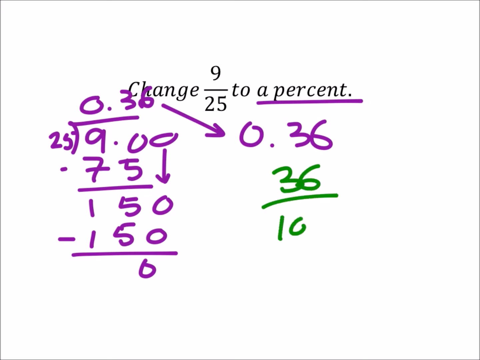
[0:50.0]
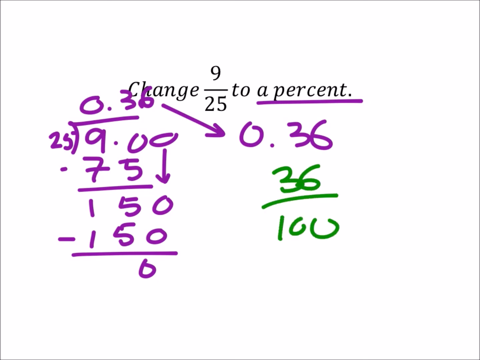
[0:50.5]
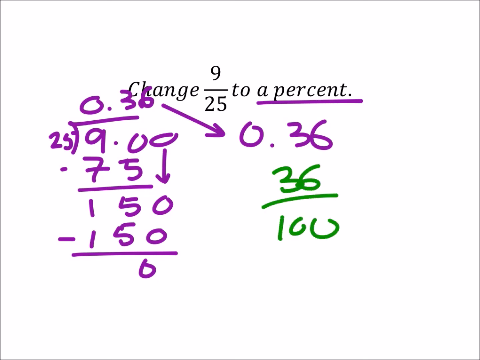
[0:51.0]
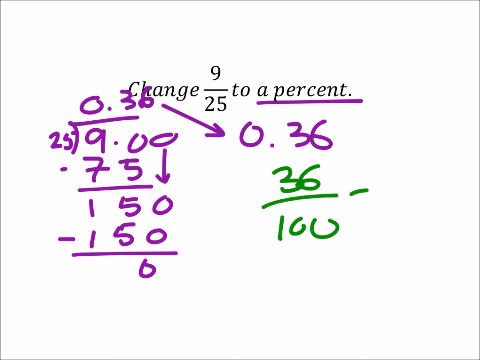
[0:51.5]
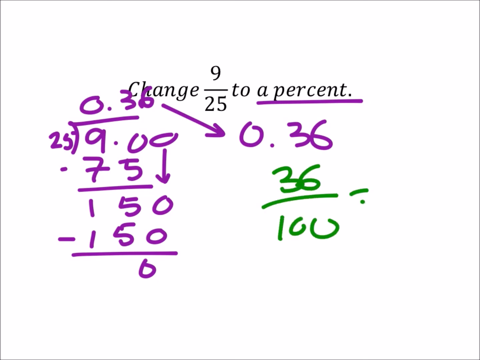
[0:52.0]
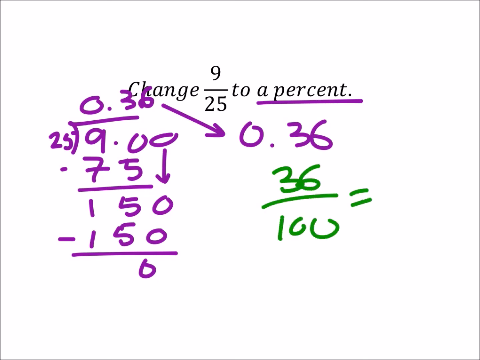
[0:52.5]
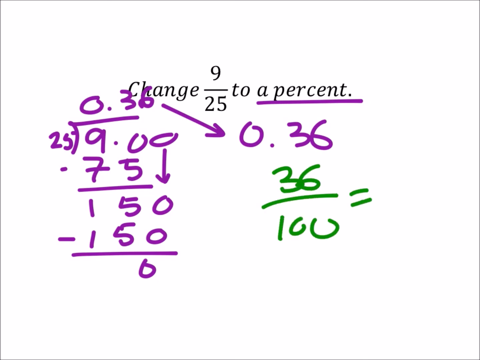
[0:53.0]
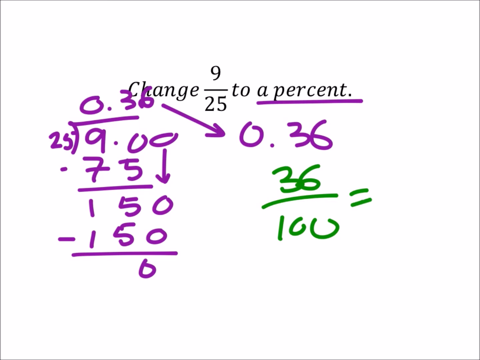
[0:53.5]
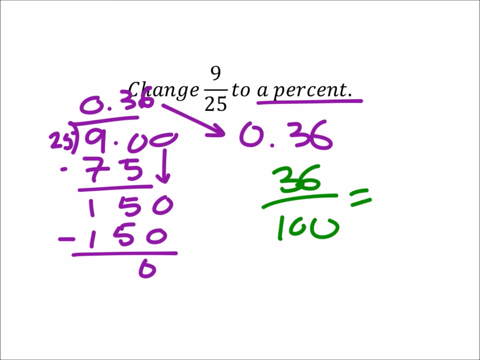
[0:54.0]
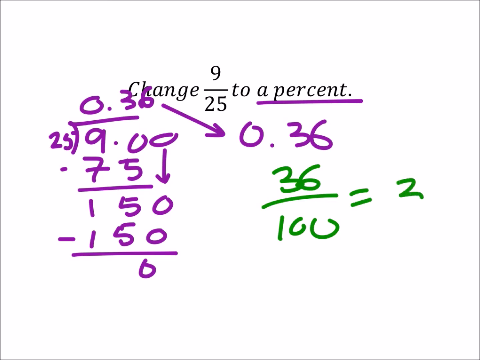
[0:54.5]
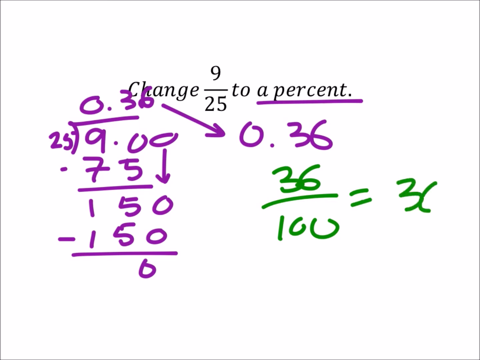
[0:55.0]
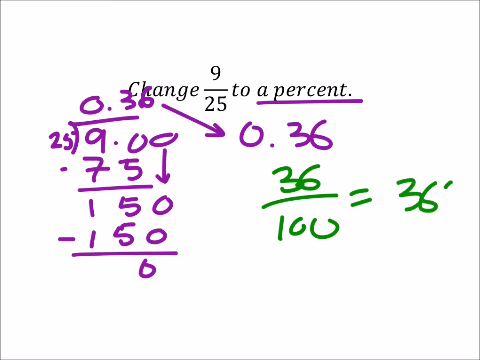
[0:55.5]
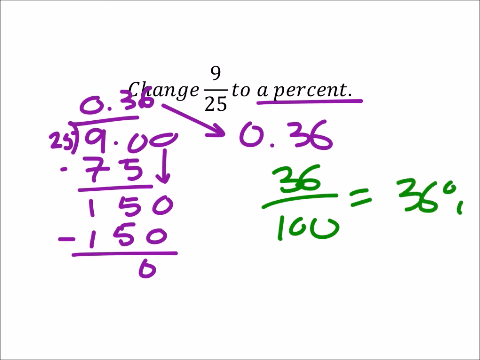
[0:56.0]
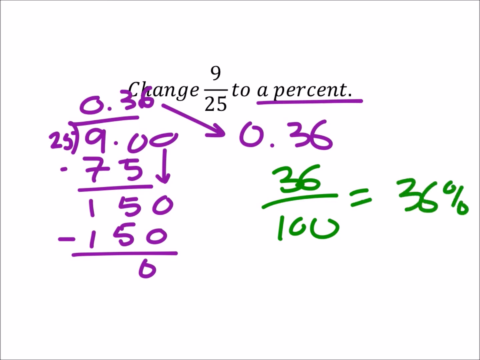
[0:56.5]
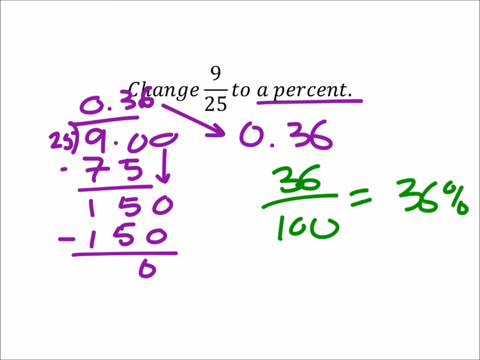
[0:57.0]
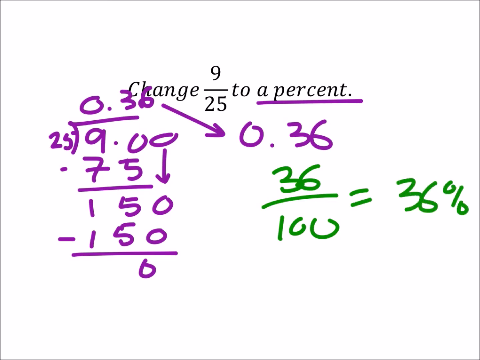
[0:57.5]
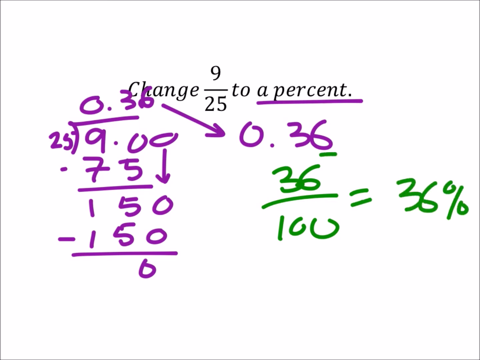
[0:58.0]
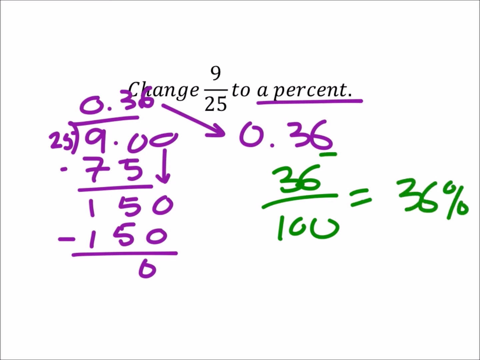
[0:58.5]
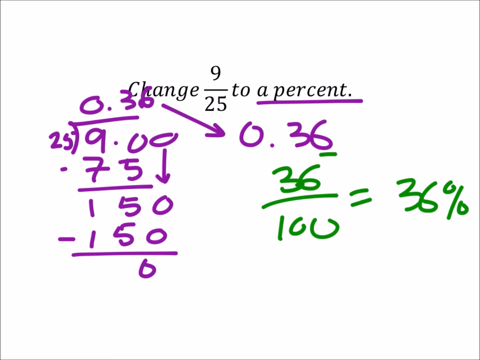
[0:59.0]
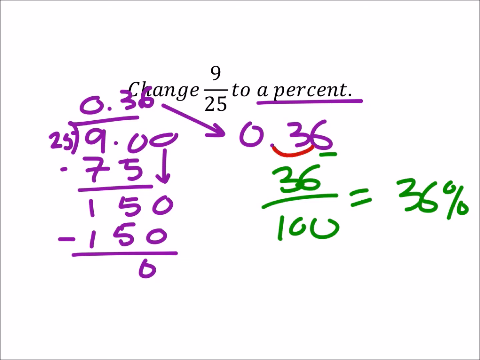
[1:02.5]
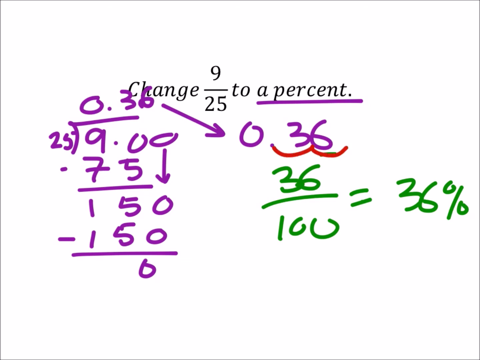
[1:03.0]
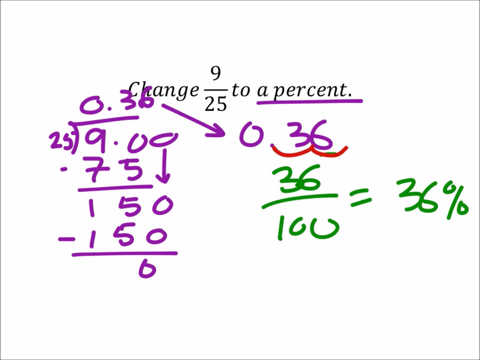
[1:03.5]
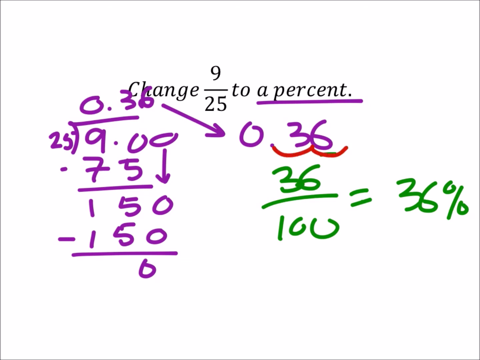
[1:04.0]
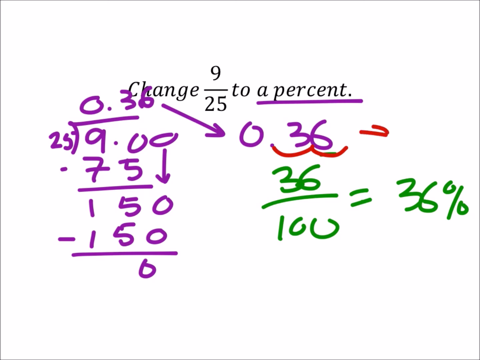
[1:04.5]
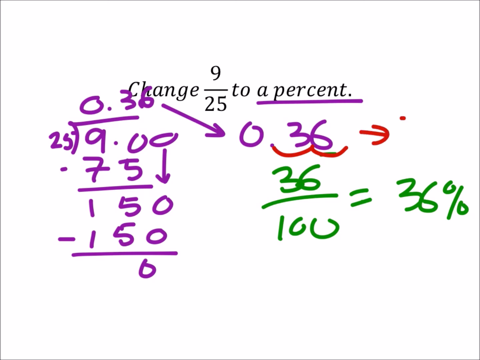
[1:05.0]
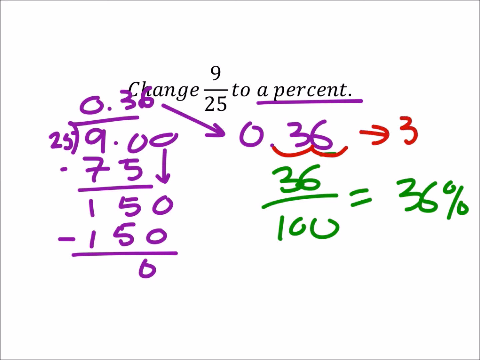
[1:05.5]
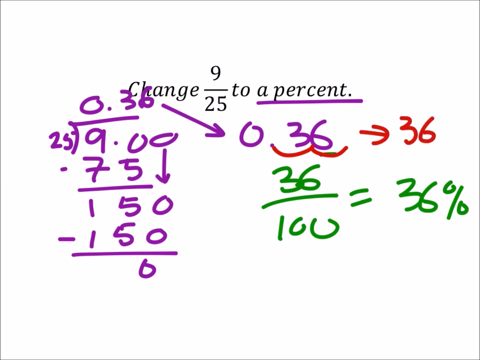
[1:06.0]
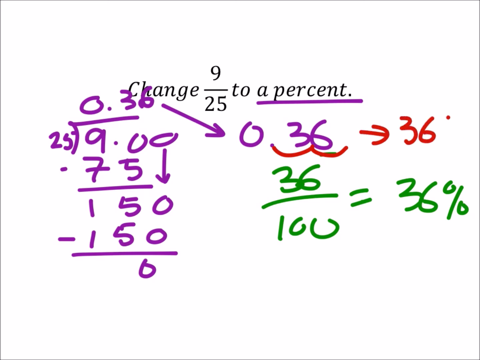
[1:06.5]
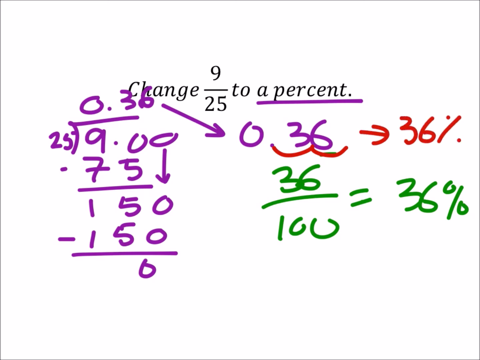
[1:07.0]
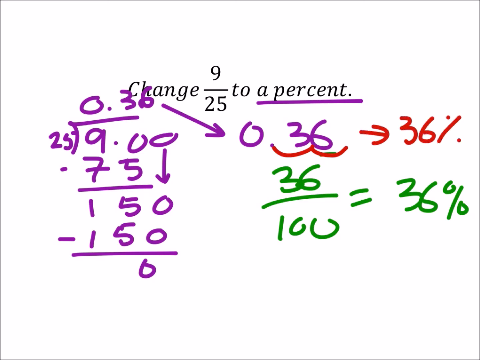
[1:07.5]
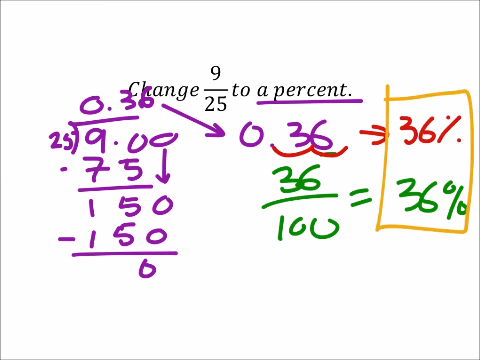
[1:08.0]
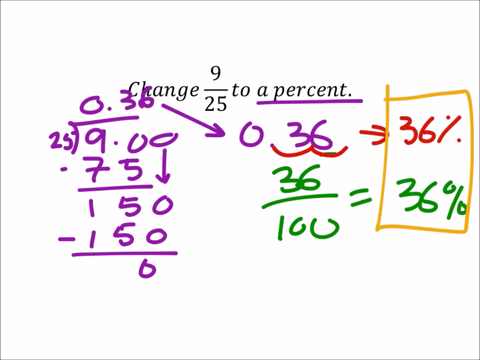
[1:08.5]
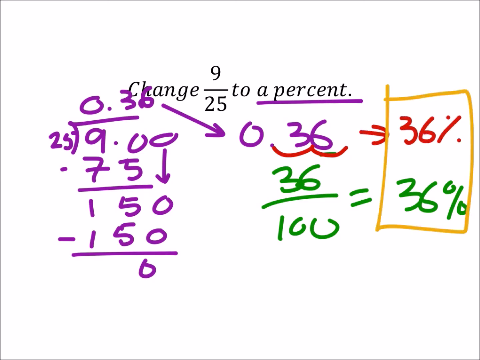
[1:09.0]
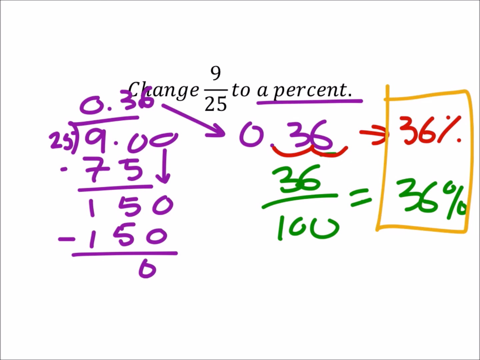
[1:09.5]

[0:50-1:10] A 0 is added to the green 10, turning it into 100, followed by an equals sign and a 36 to its right, so the green text reads 36 over 100 equals 36. A % symbol is added to the 36, giving 36 over 100 equals 36%. The purple 0.36 just above the green 36 over 100 has its 6 underlined in green. A red pen then underlines this purple 0.36 with a wavy, moustache-shaped underline. A right-pointing red arrow is added to the right of the purple 0.36, followed by 36% written in red. This red 36% and the green 36% beneath it are enclosed in a yellow rectangular frame. The frame is hand drawn and slightly irregular, with its left-hand side projecting a little above the level of the top edge.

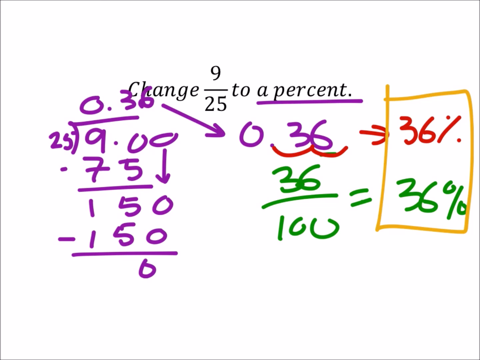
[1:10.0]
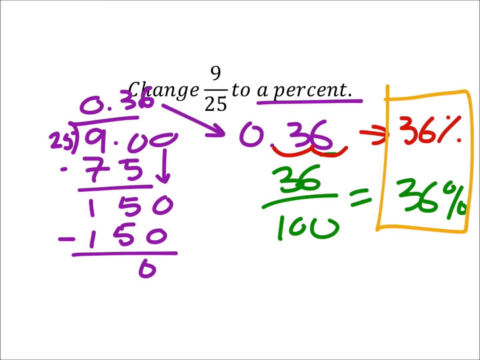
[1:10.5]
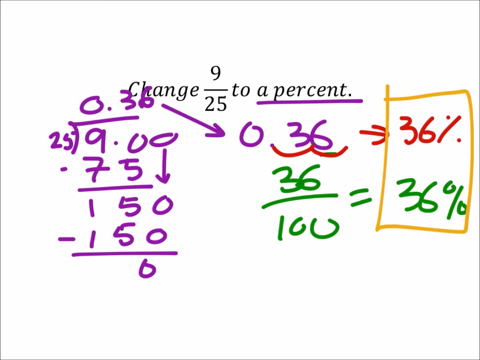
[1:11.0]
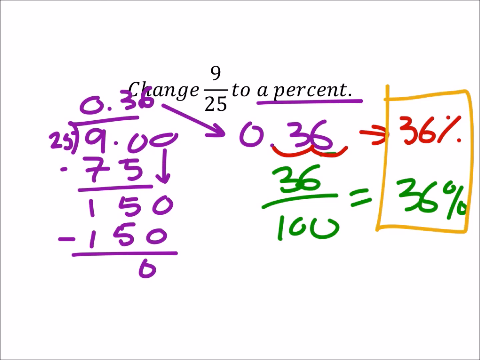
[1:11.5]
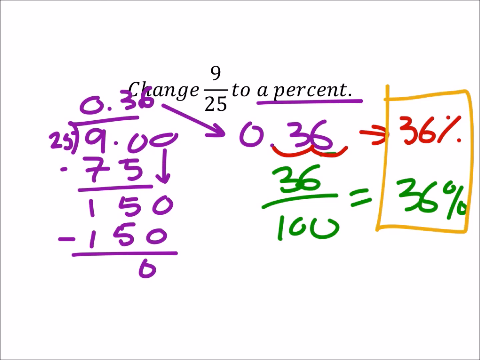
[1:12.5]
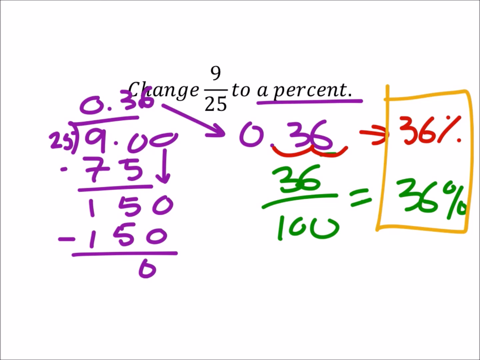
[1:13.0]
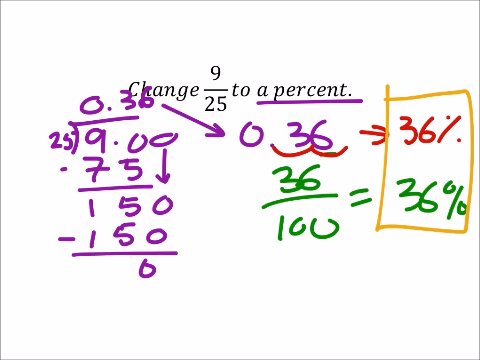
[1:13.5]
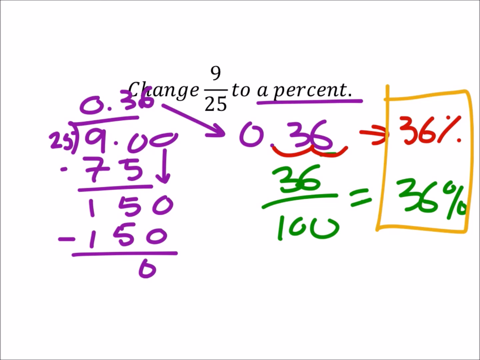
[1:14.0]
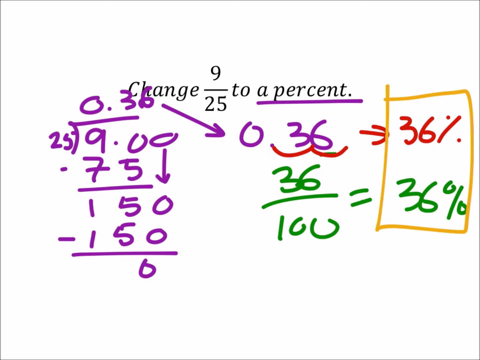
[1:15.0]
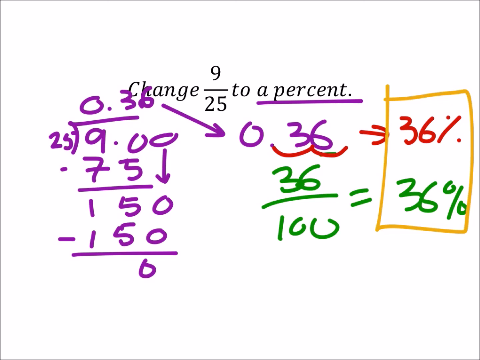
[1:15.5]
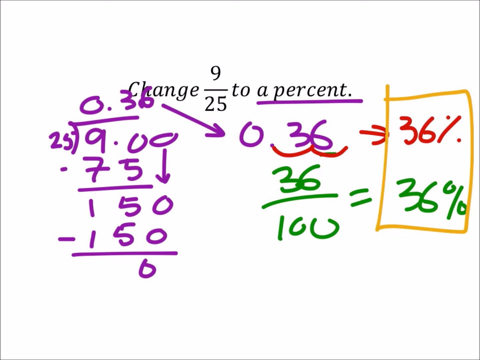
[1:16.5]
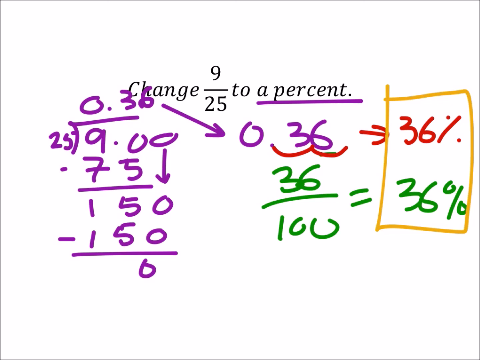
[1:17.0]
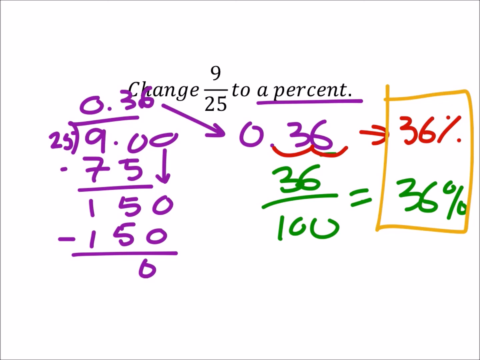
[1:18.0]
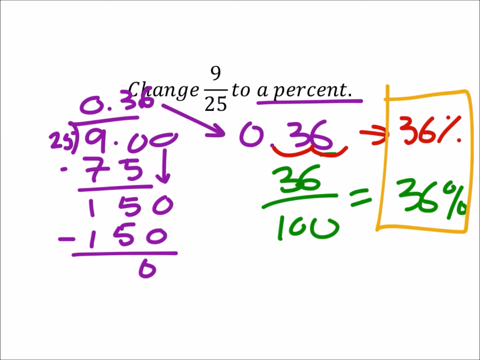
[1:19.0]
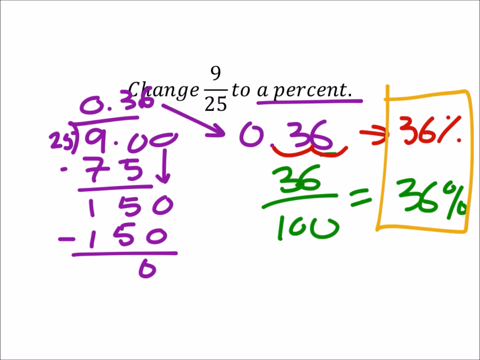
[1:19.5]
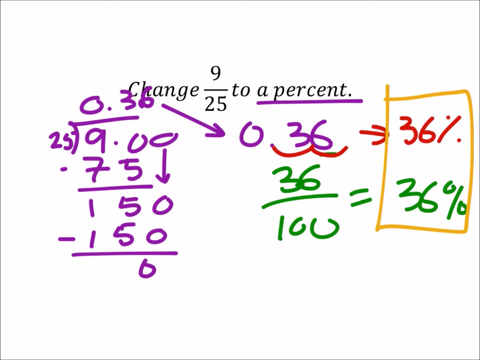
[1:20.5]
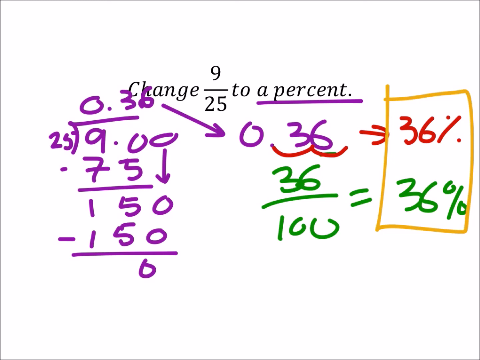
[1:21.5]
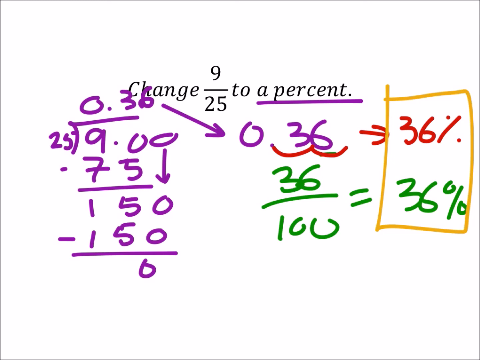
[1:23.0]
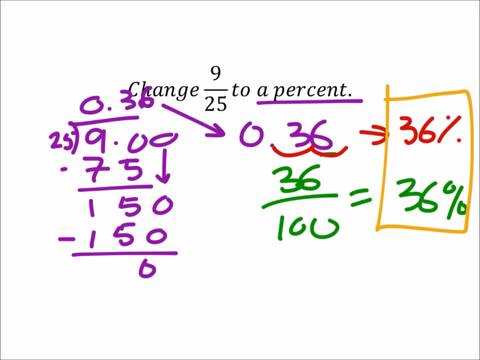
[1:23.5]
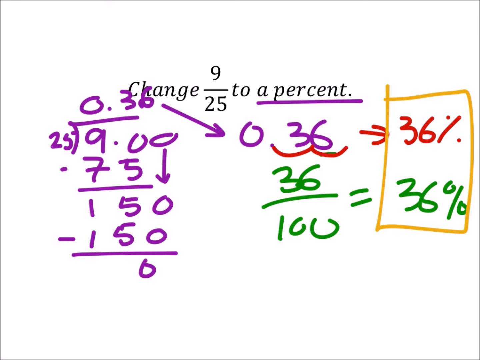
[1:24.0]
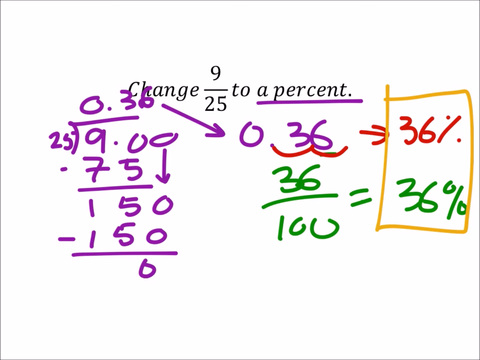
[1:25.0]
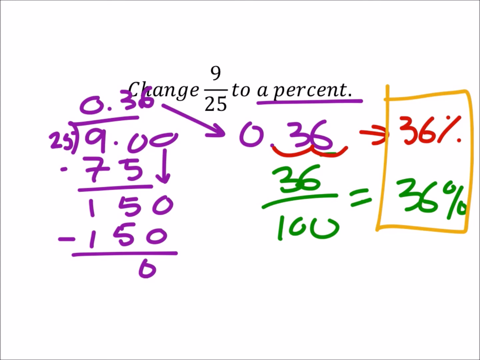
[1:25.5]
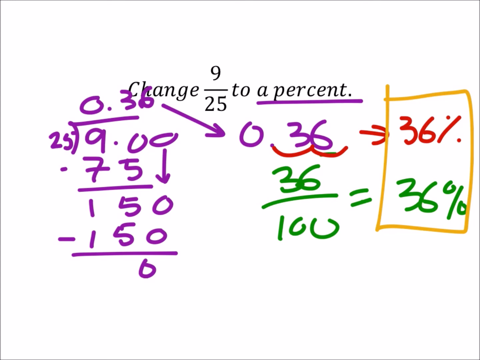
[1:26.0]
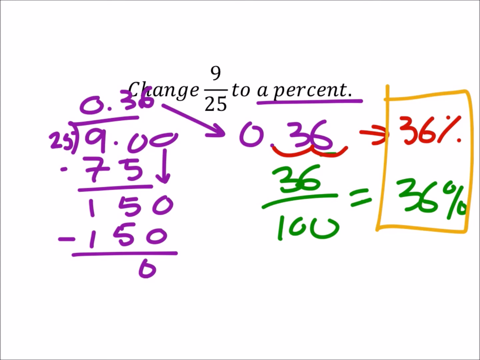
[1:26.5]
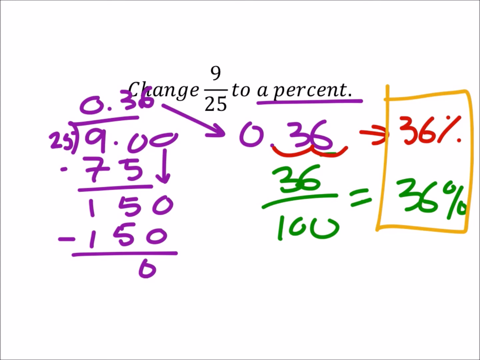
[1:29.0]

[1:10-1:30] The screen is static with no movement. At the top, in a computer font, is "Change 9 over 25 to a percent", with "a percent" underlined in handwritten purple. To the left in handwritten purple is 25, a long division symbol and 9.00, with 0.36 above the division symbol. Beneath the 9.00 is minus 75 with a downward-pointing arrow to its right, then a horizontal line, 150, minus 150, another horizontal line and a 0. To the right of the 0.36 is a purple diagonal arrow pointing down and to the right, ending in the figure 0.36. That 0.36 has a red arrow to its right and a red 36% to the right of that. Below, written in green, is 36 over 100 = 36%. The red 36% and the green one are enclosed in a handwritten yellow rectangular frame.